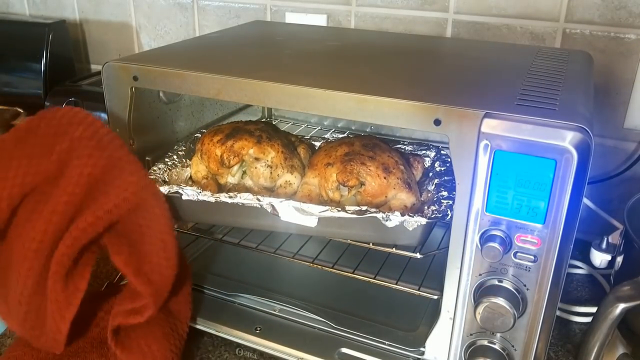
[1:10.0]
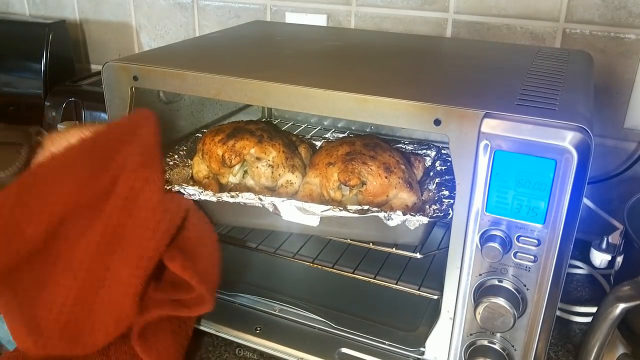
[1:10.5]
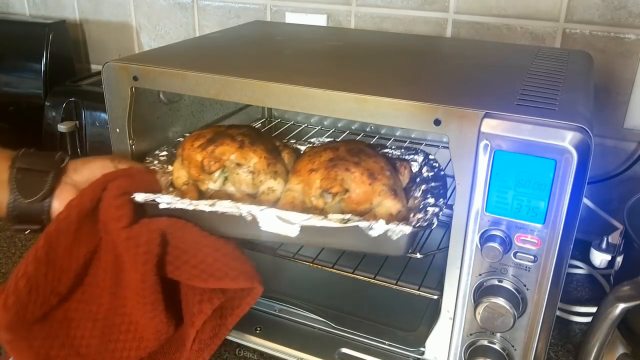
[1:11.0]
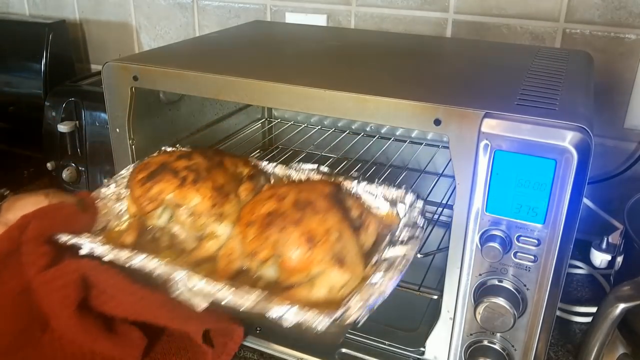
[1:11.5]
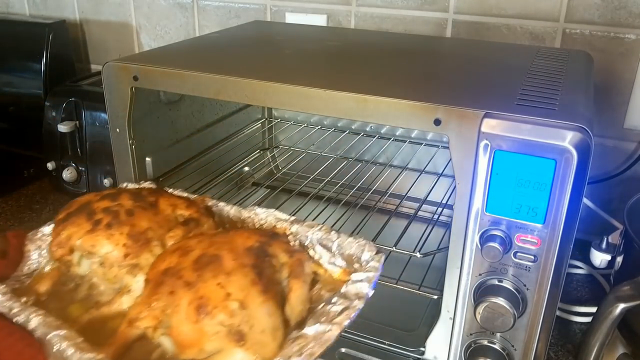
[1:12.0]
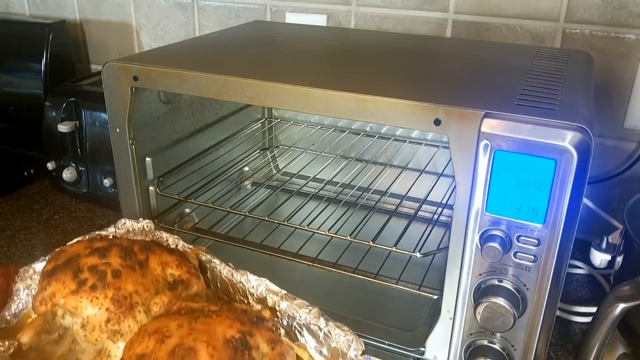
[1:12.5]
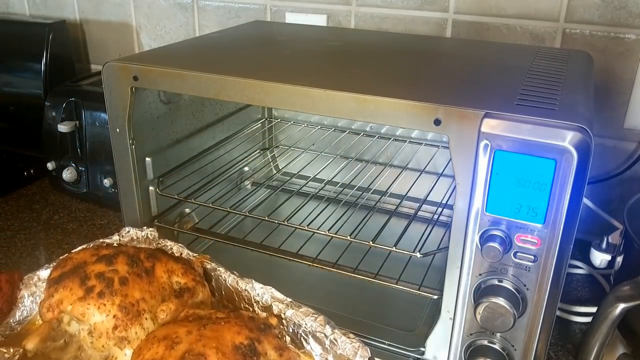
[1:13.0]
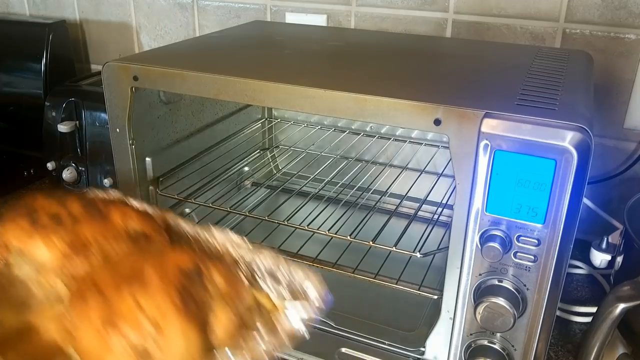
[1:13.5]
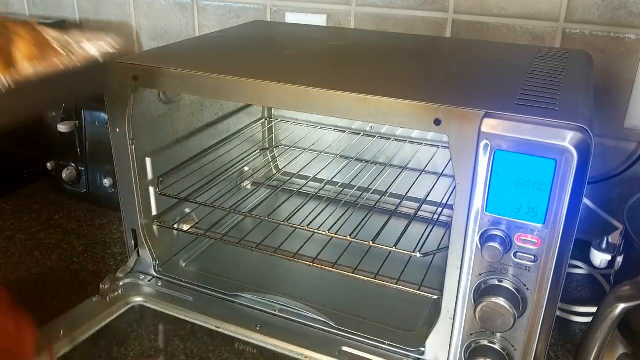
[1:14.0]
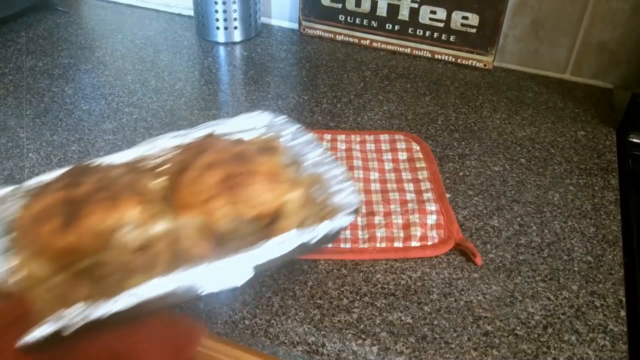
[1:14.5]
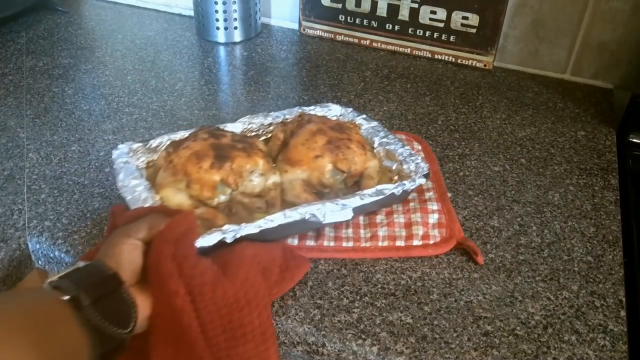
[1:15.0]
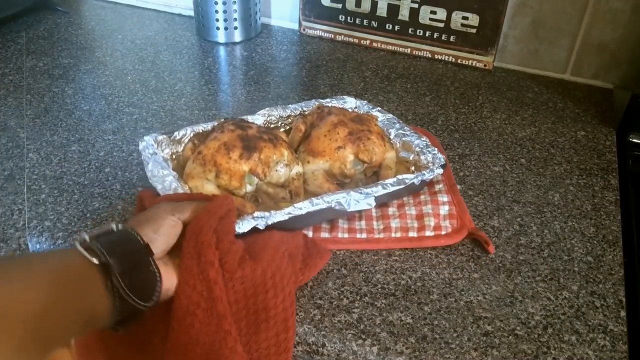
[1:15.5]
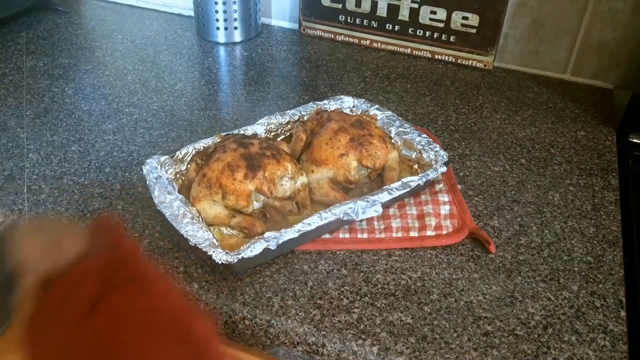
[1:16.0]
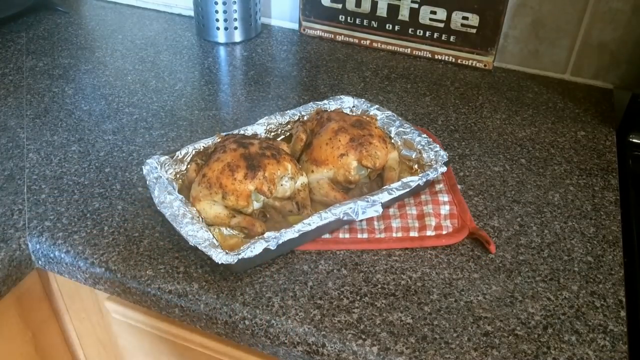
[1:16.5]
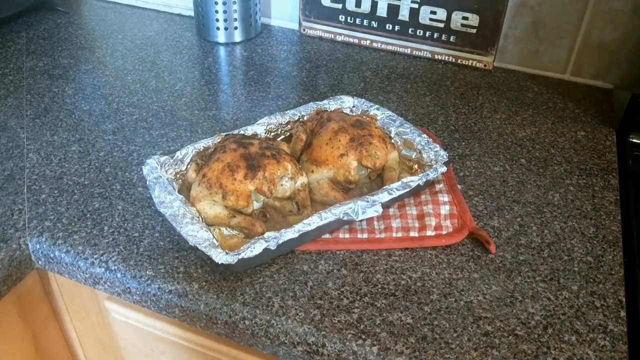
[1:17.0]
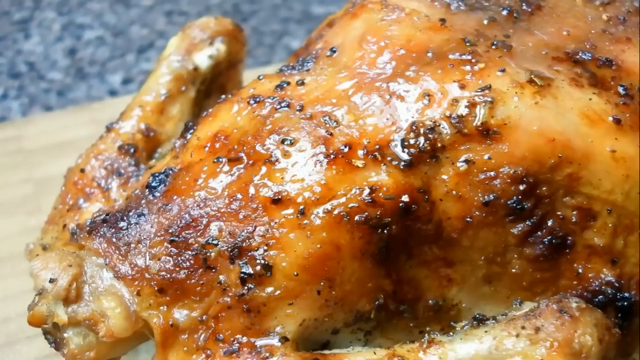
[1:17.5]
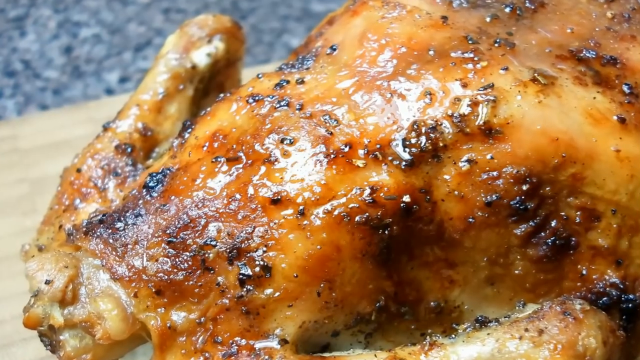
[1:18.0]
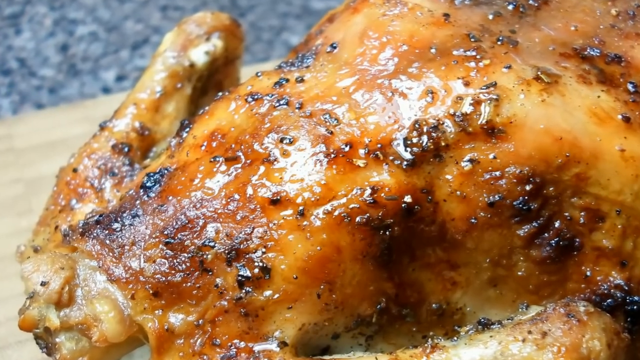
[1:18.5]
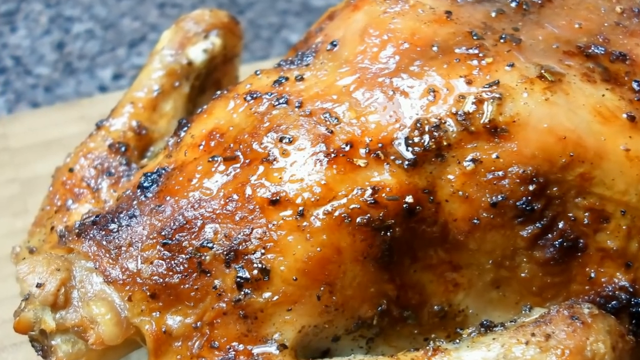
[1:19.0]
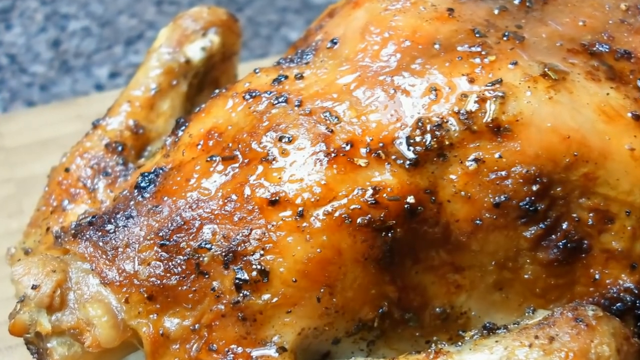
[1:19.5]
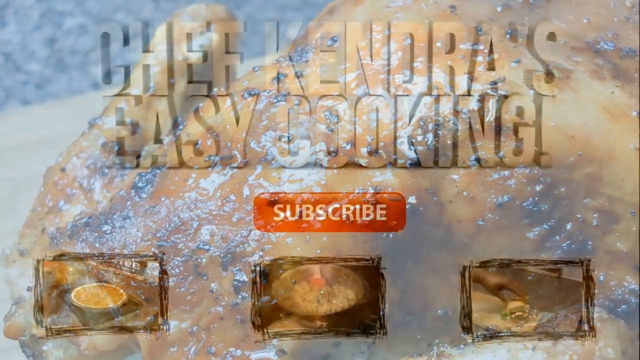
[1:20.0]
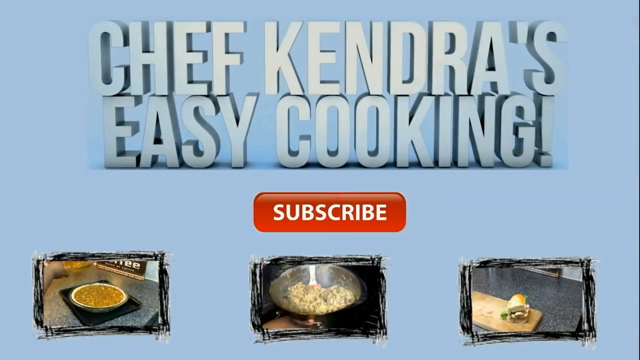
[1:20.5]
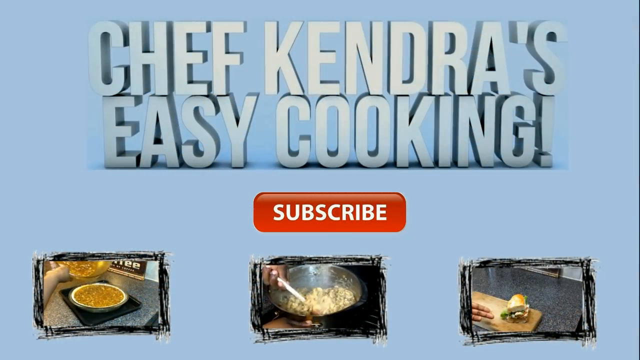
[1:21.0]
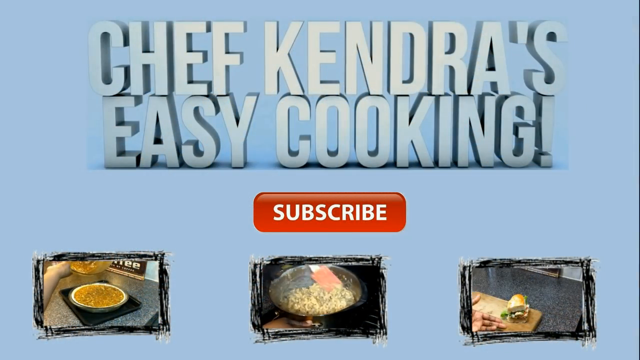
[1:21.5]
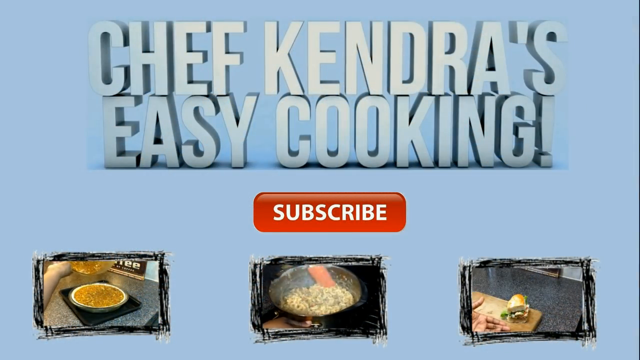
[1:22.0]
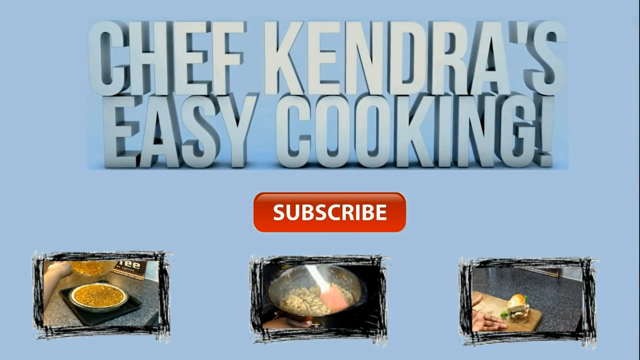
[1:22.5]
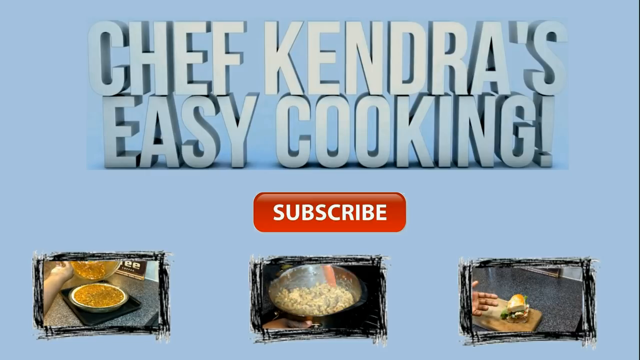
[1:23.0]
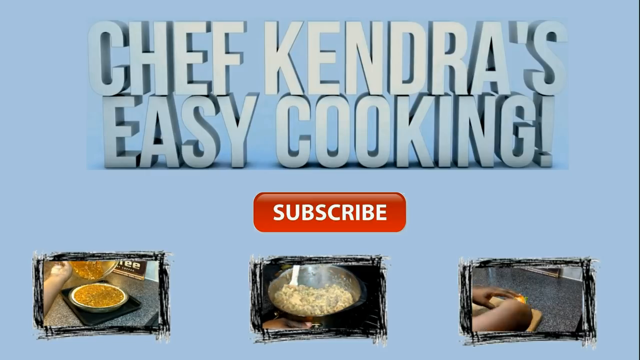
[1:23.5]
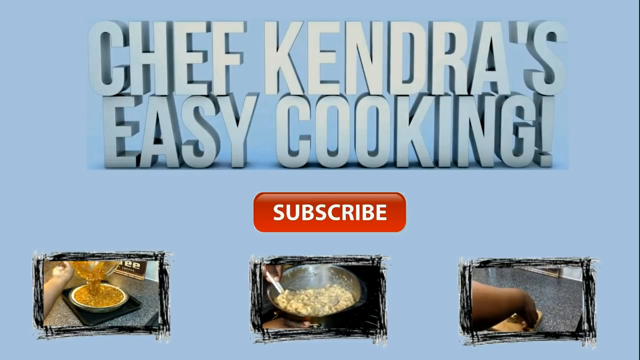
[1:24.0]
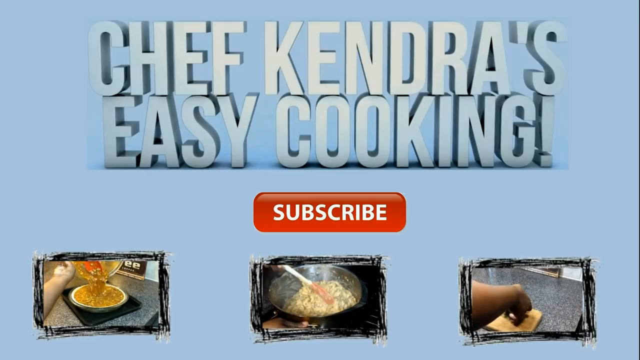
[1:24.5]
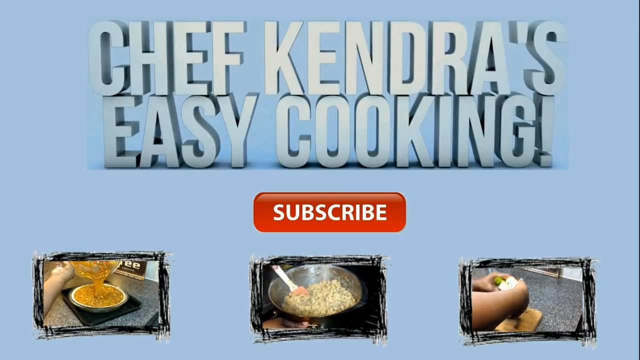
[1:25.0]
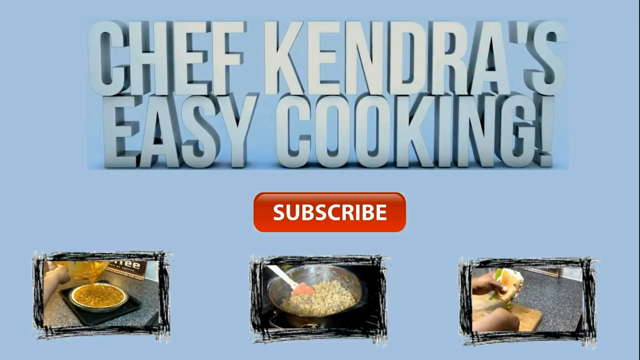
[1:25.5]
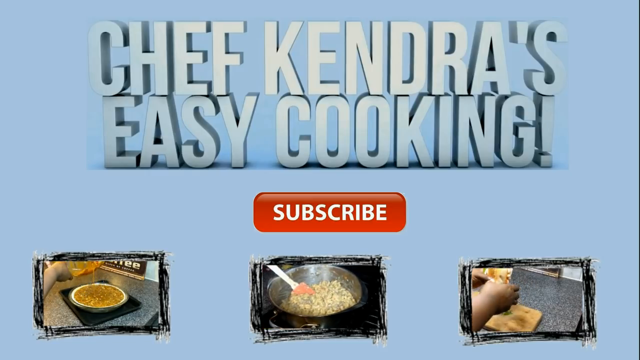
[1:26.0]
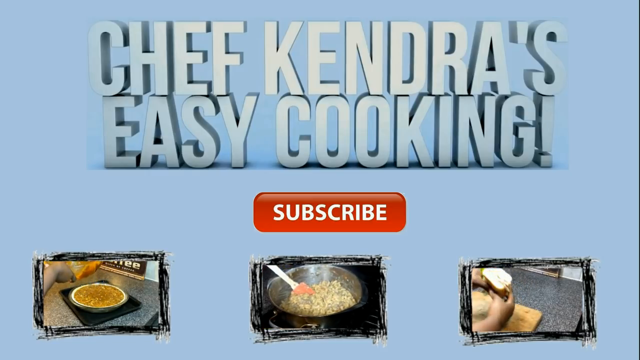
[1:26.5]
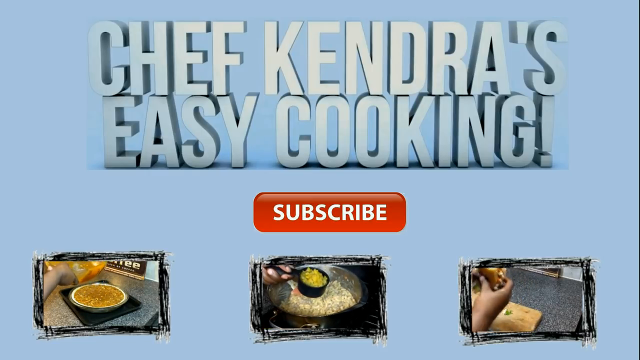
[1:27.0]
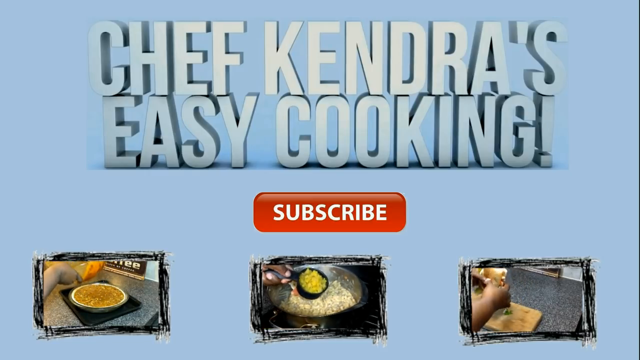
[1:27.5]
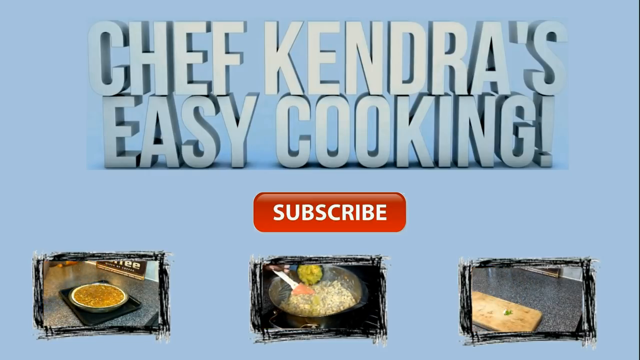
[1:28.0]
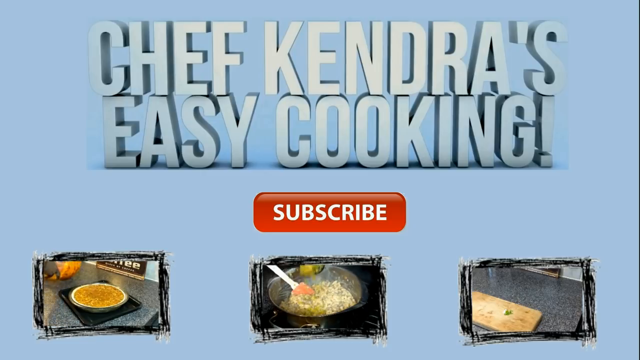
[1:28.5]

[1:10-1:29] She pulls the Cornish hens out of the oven and places them on the counter on a trivet, a potholder, followed by another close-up. The video ends there; no one is shown eating the hens or cutting them.